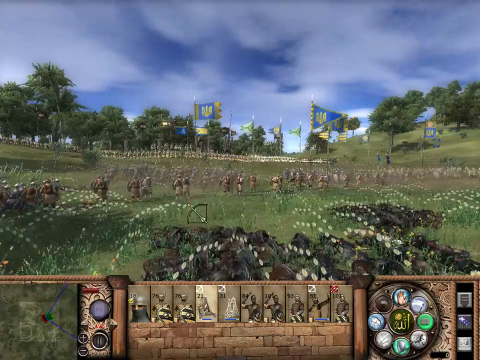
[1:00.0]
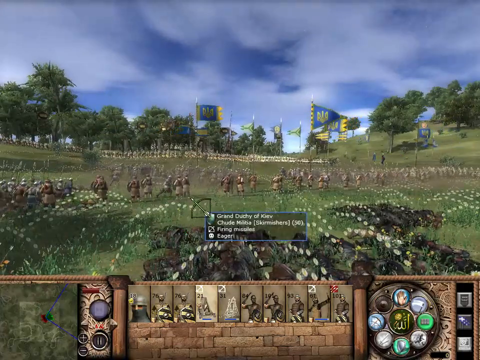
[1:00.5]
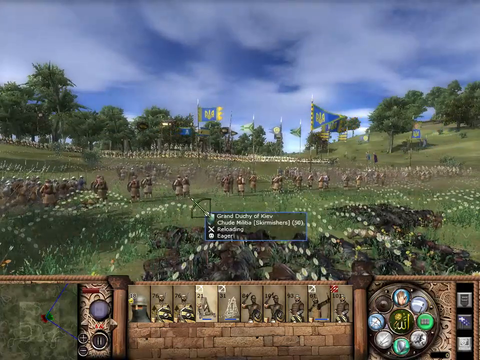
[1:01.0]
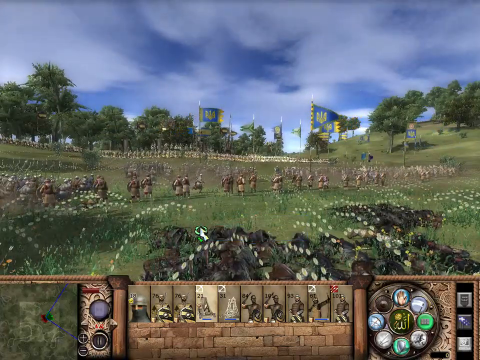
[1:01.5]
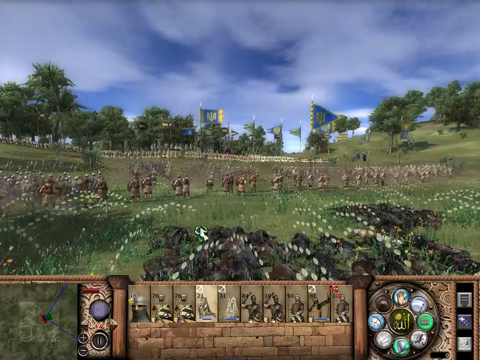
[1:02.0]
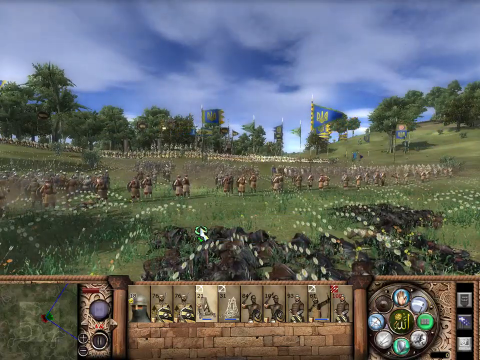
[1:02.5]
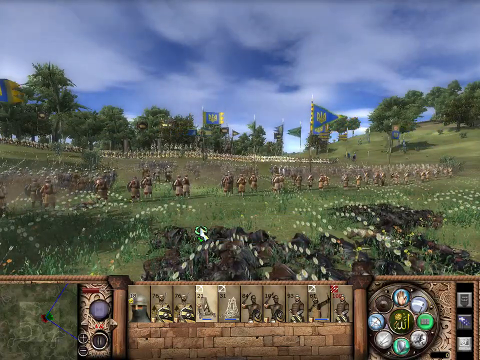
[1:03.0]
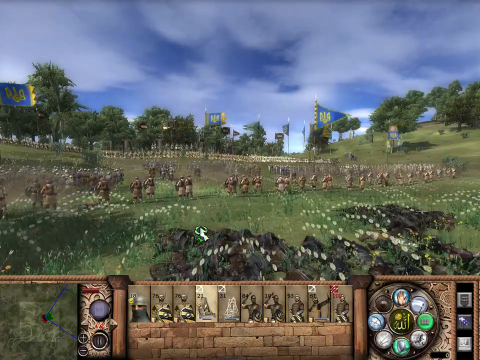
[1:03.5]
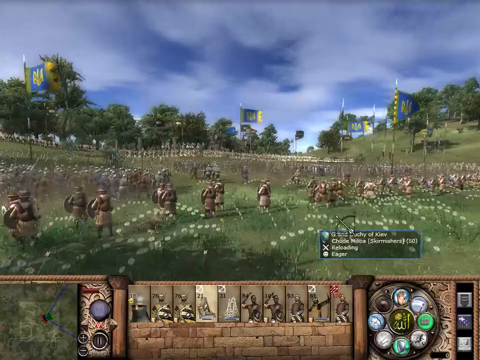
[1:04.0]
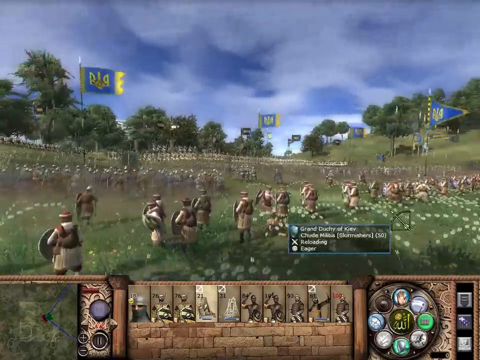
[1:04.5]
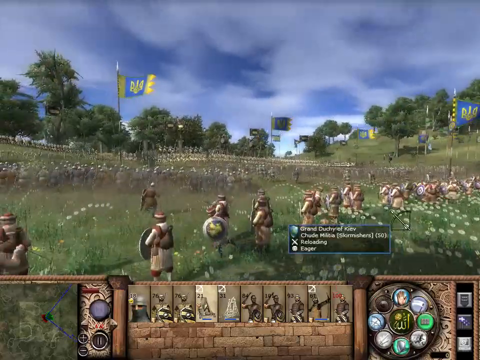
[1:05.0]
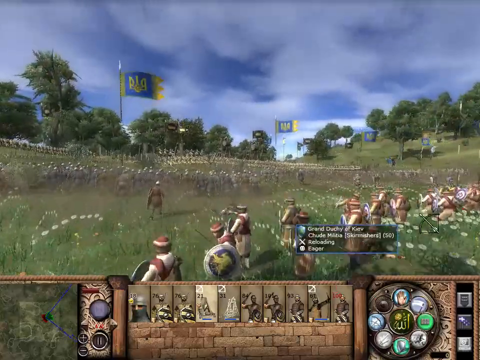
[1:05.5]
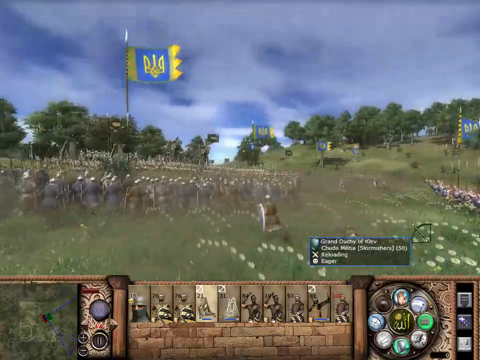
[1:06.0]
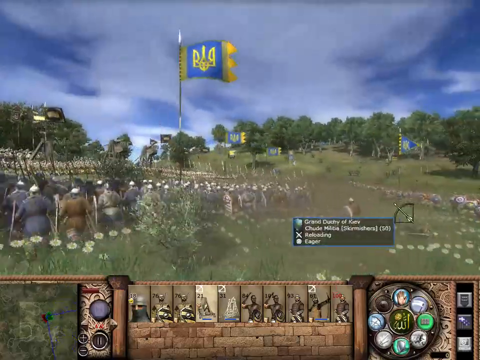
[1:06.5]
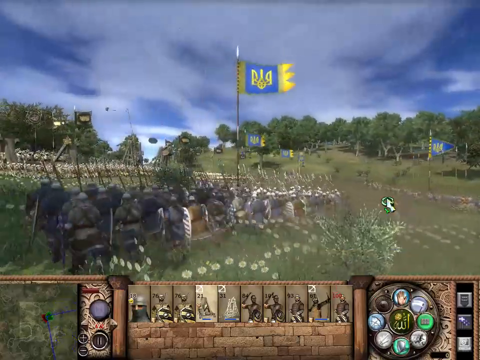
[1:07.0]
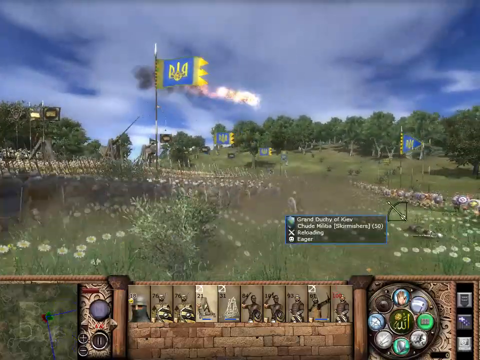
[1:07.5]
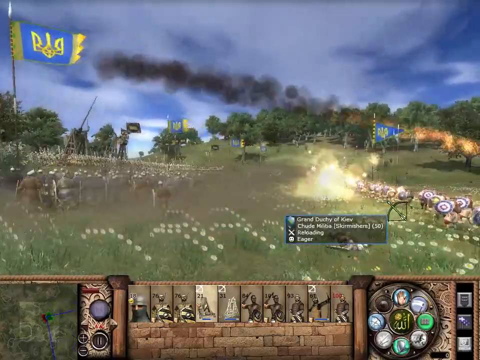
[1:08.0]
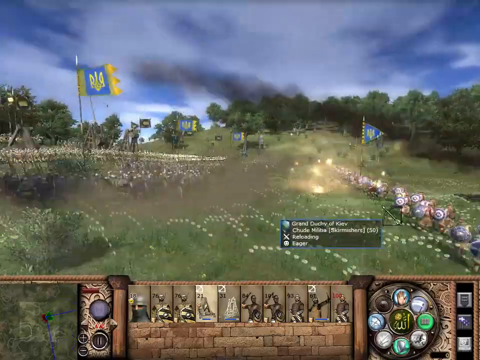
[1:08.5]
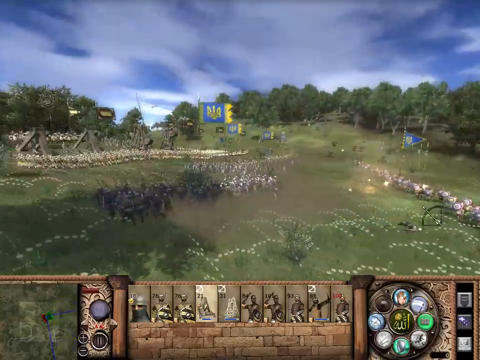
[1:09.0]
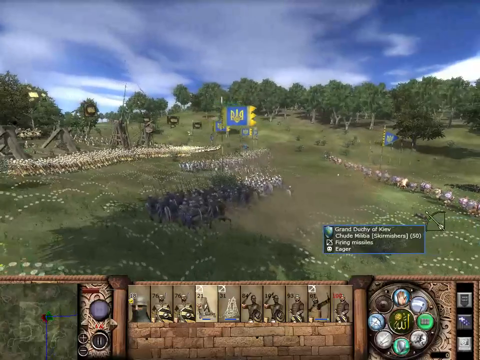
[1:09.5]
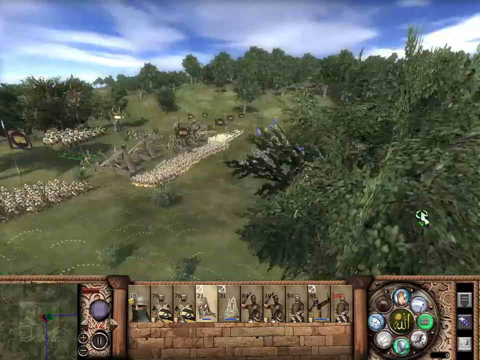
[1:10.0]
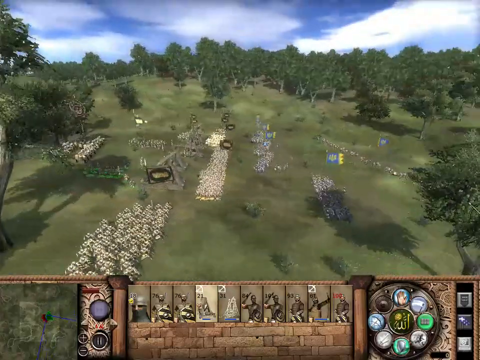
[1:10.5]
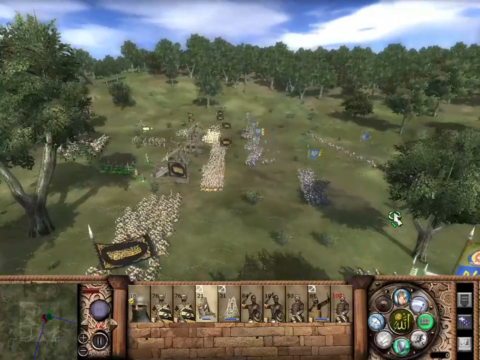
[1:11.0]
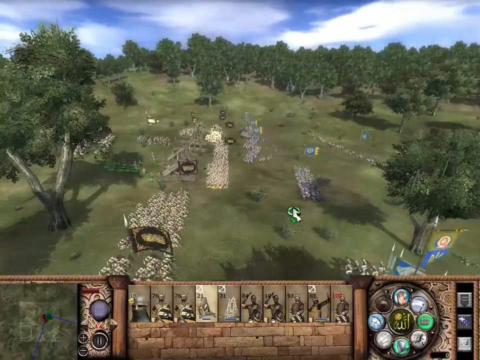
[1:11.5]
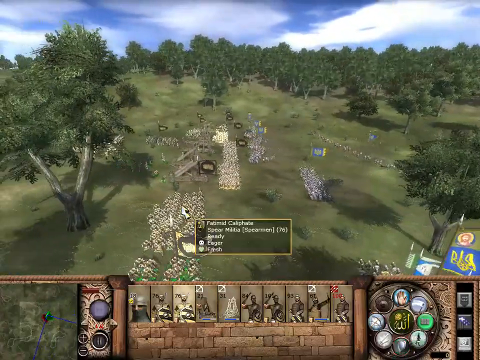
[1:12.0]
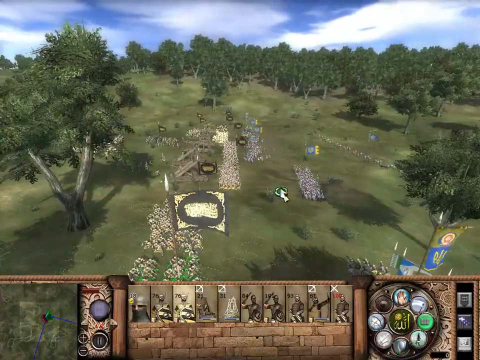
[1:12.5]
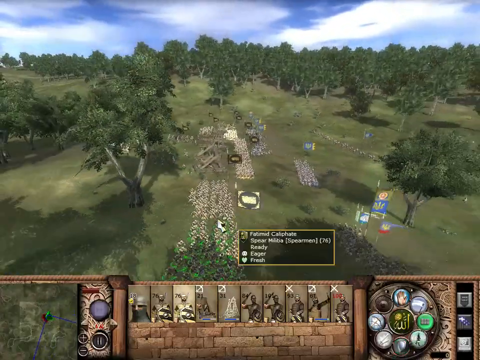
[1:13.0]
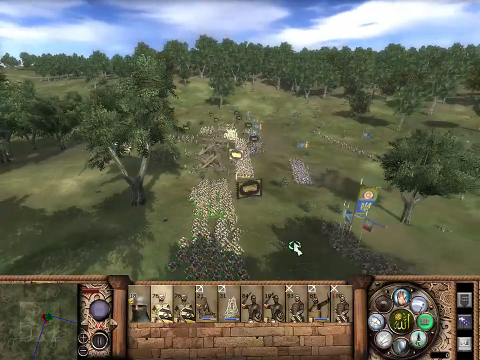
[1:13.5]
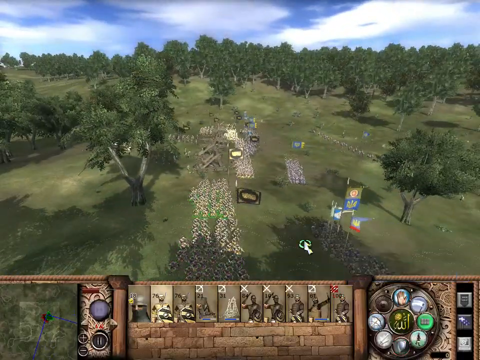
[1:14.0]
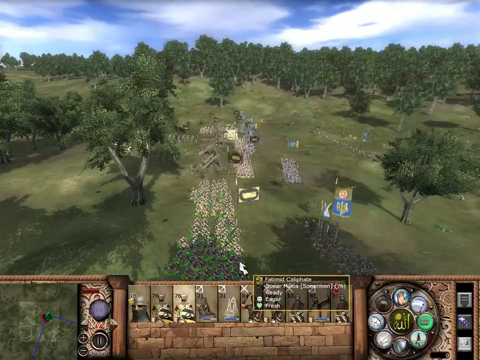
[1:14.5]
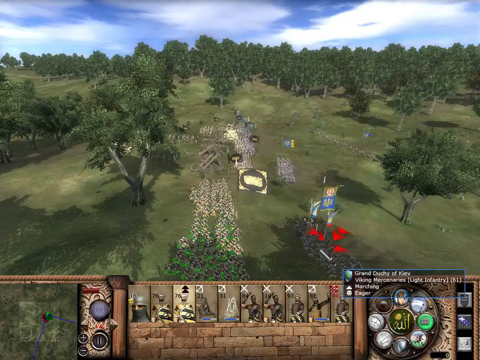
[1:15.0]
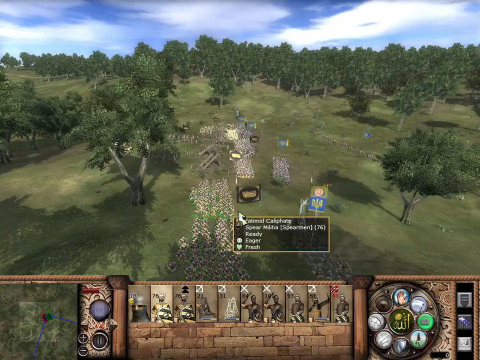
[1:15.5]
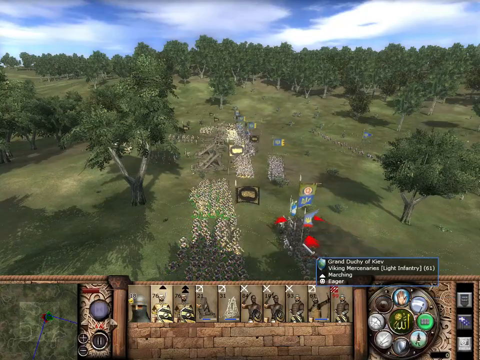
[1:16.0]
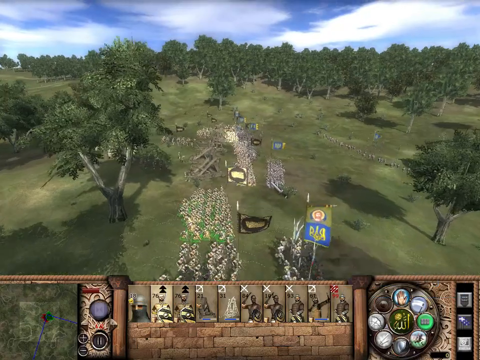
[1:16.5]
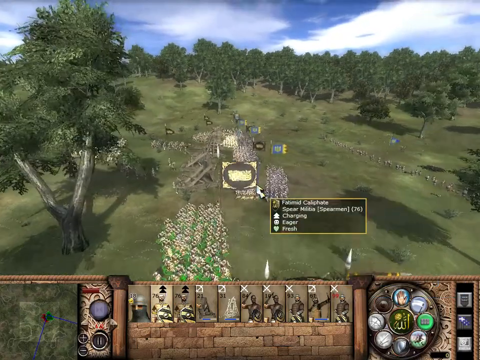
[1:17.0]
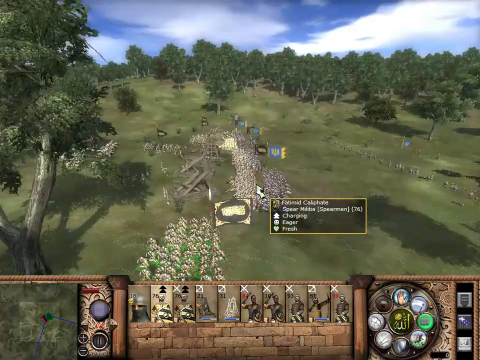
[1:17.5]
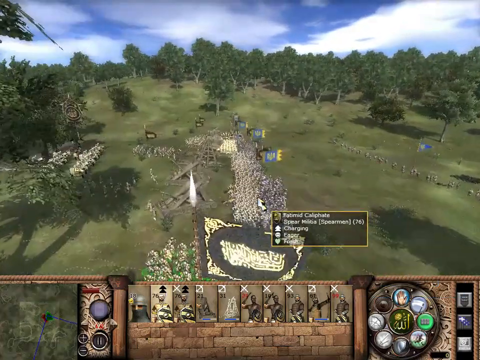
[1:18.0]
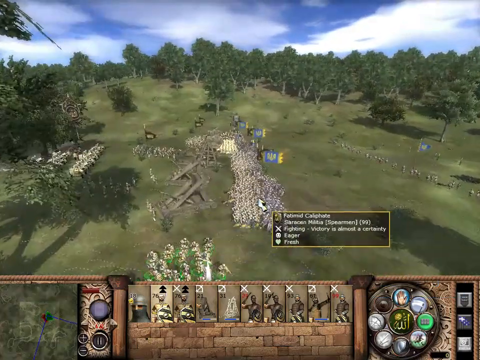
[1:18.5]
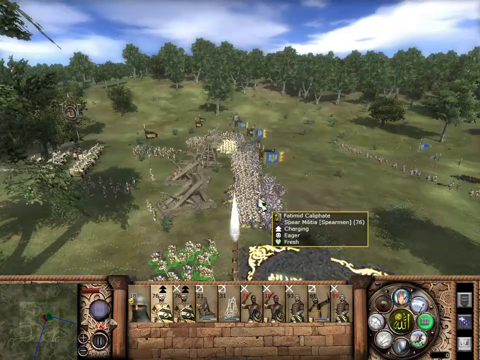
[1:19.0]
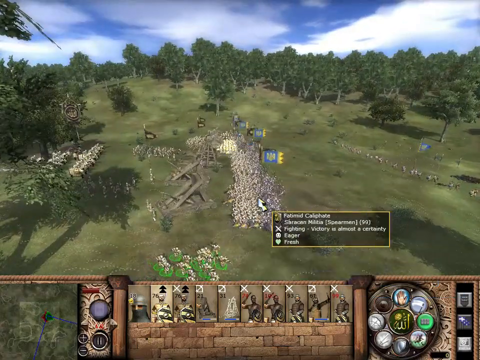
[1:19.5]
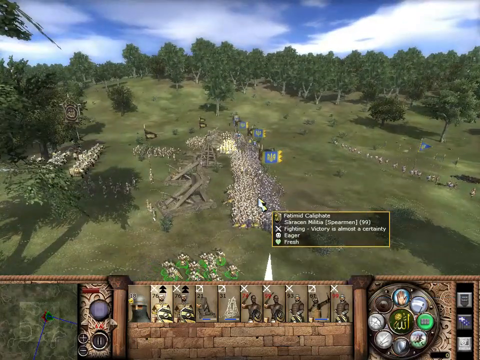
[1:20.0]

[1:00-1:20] The side with the blue and yellow, or blue and gold, flags is shown. Of a bunch of soldiers, many have been killed or are cast out. Some that are alive are gathered, ready to fire back, and move toward the enemy while the camera pans, following them. More mortars are fired from the black and gold side. A view shows both sides, with the blue side on the right and the yellow and black side on the left. There are more trees, and the skies are still blue with some clouds, not severely cloudy. There are some green flower-type things on the ground, and the game is mainly green. A lot of movement goes on between both sides. What looked like green flowers are soldiers, possibly with green hats or green outfits, apparently moving in for a retaliatory attack. Some of them have shields.